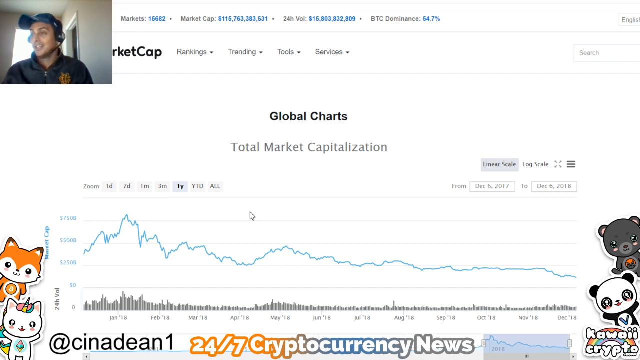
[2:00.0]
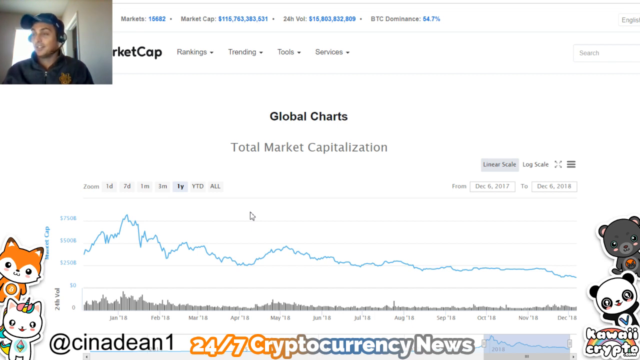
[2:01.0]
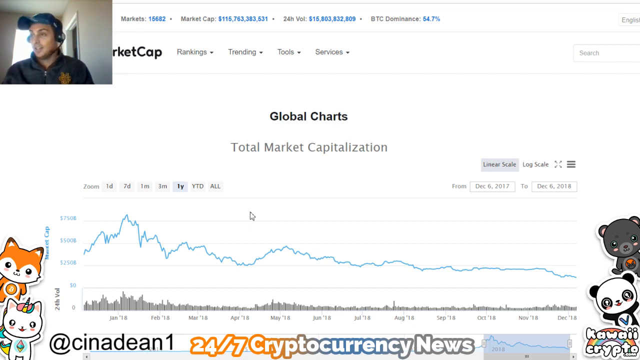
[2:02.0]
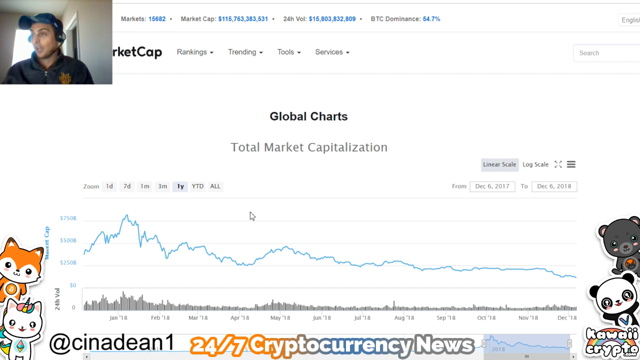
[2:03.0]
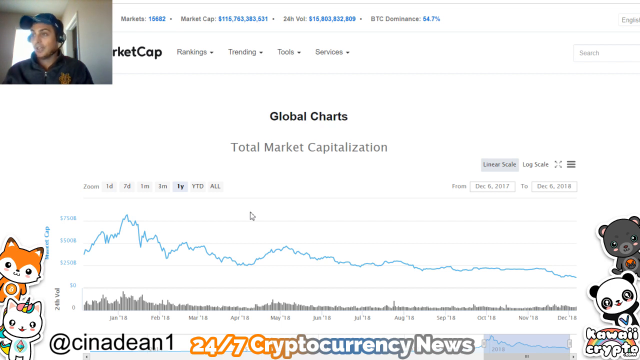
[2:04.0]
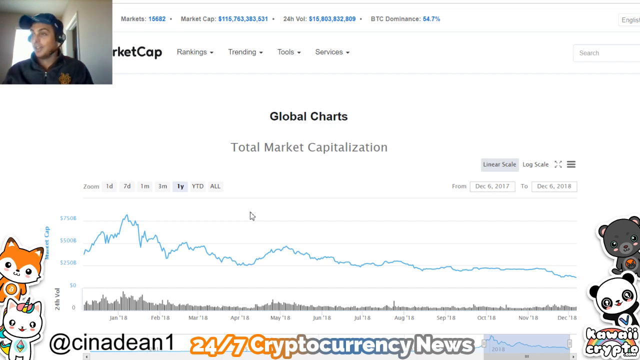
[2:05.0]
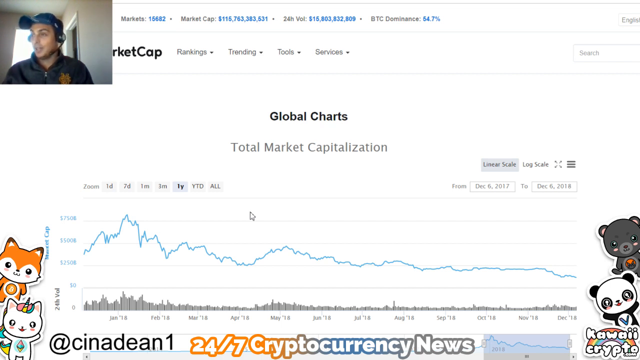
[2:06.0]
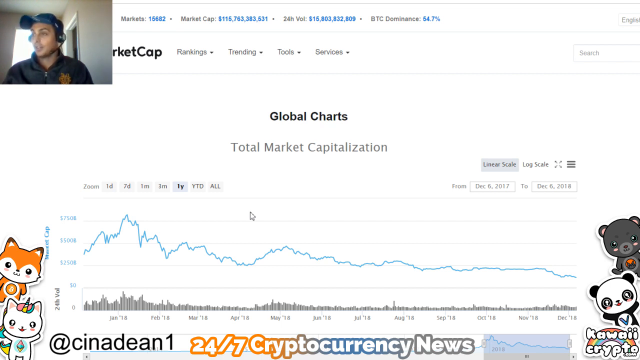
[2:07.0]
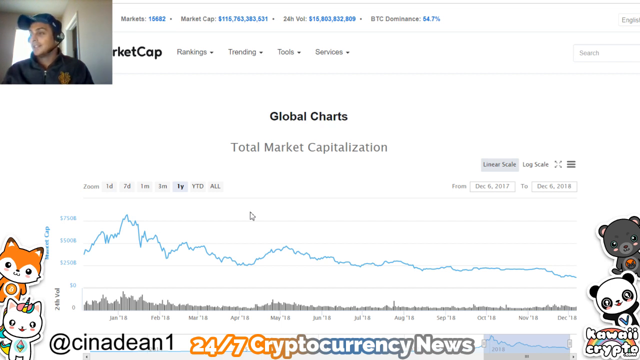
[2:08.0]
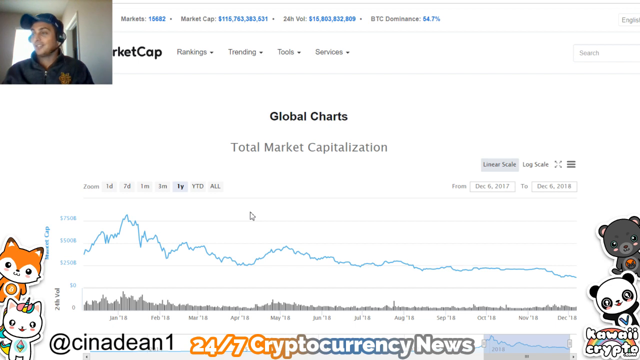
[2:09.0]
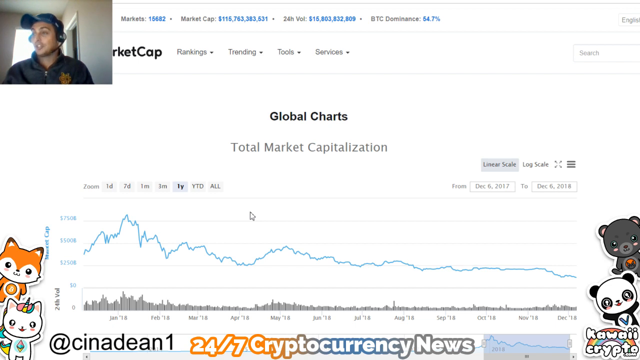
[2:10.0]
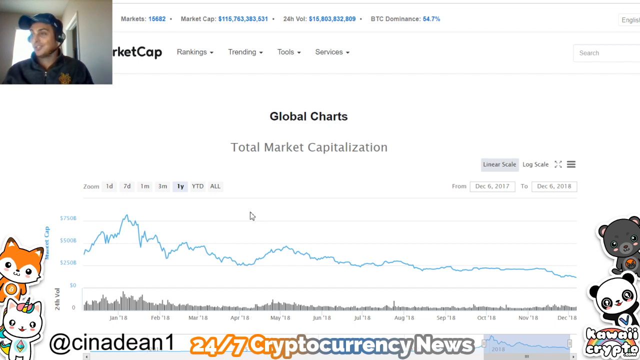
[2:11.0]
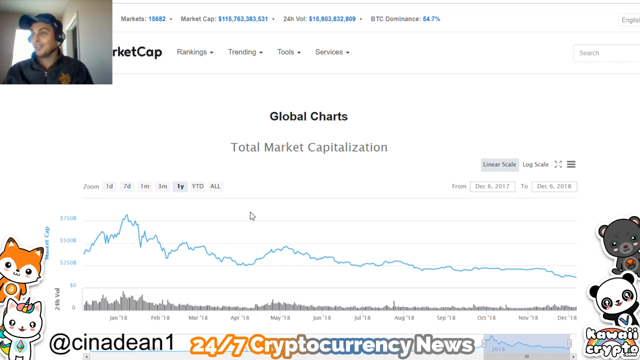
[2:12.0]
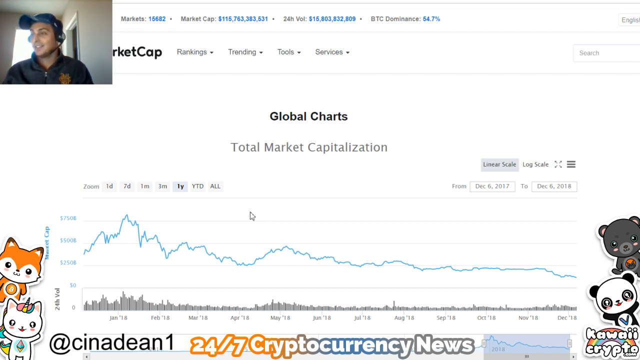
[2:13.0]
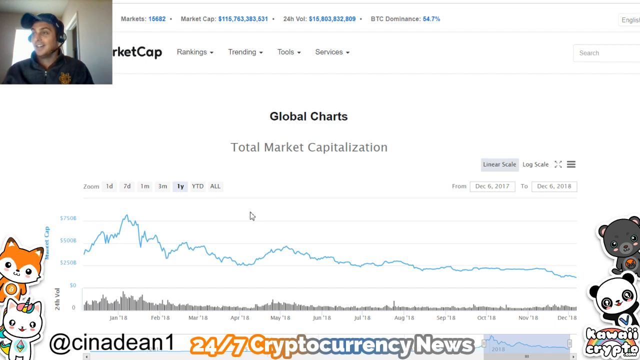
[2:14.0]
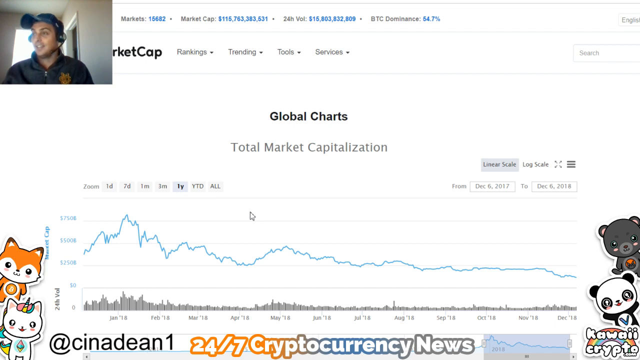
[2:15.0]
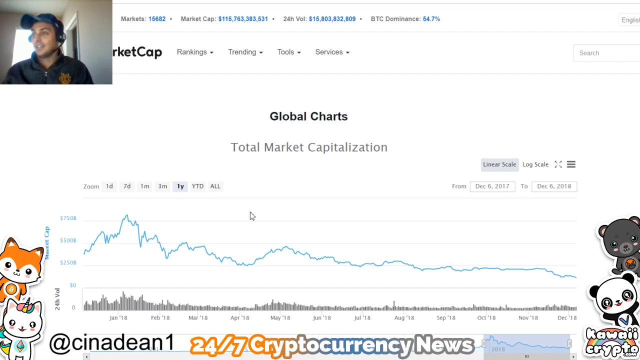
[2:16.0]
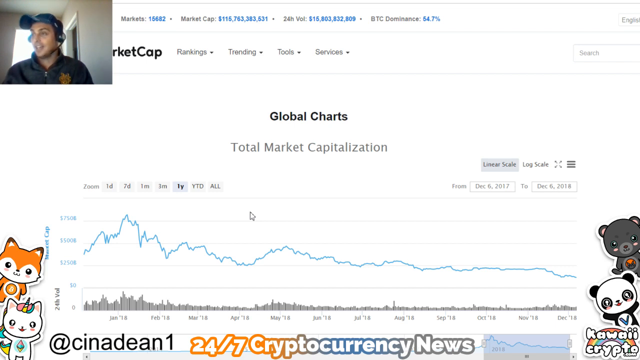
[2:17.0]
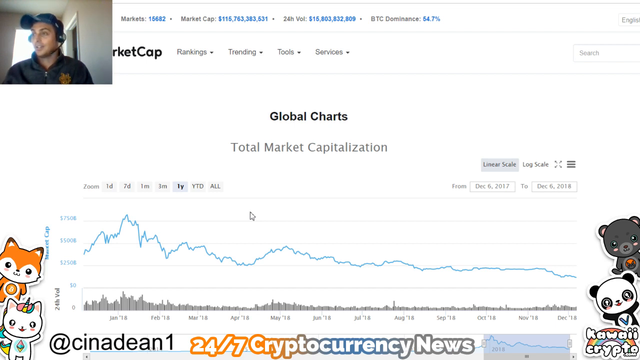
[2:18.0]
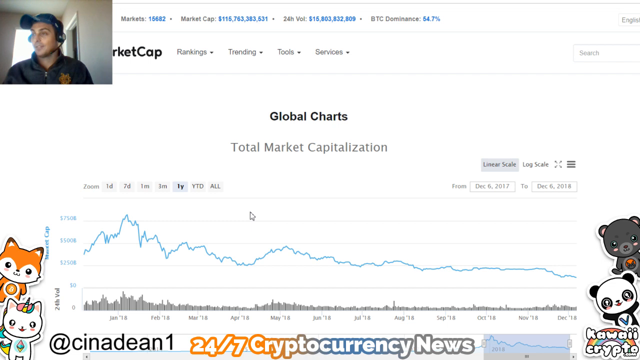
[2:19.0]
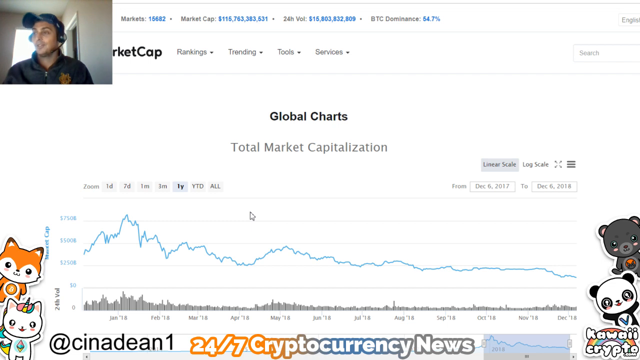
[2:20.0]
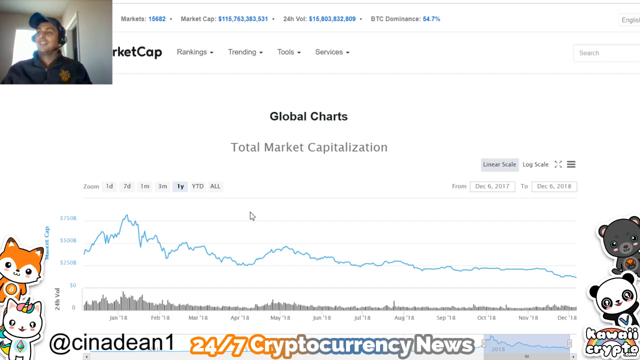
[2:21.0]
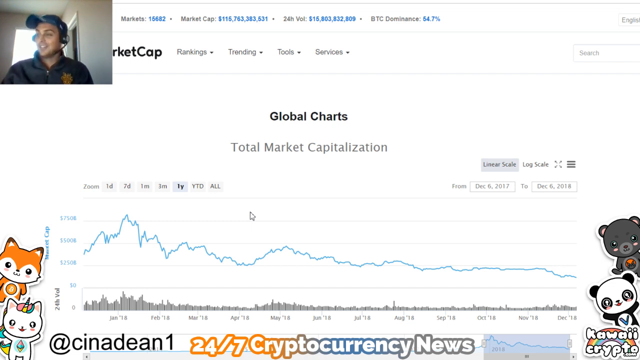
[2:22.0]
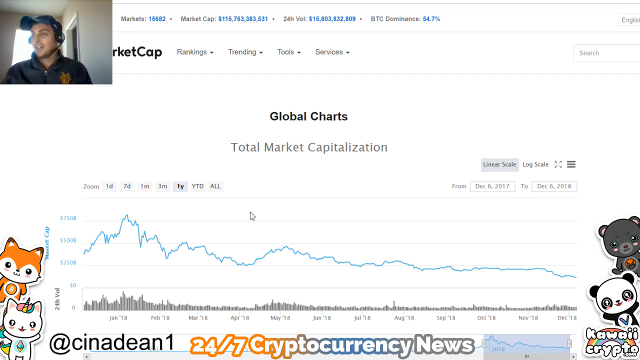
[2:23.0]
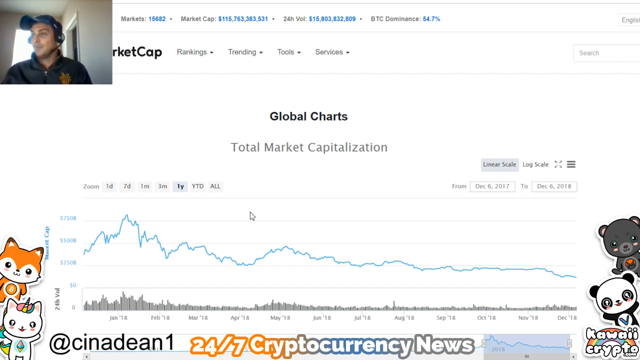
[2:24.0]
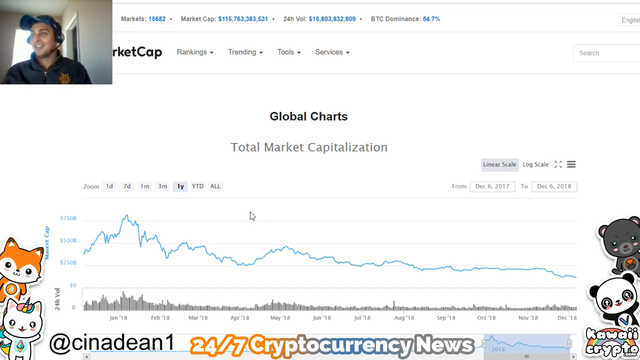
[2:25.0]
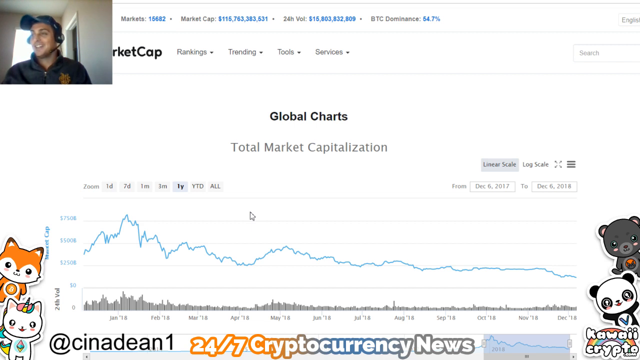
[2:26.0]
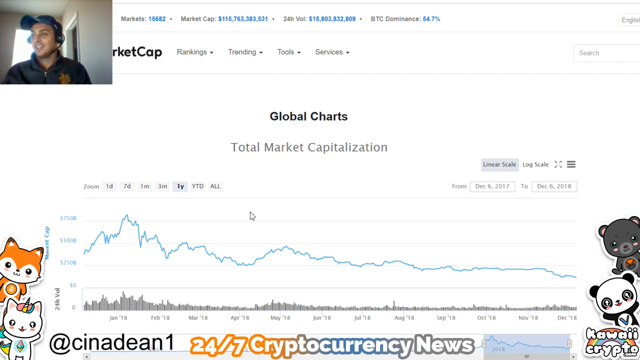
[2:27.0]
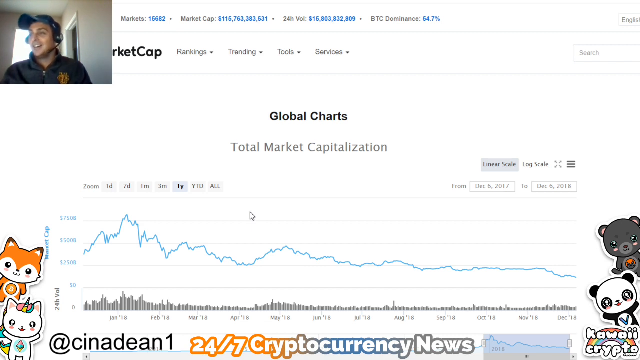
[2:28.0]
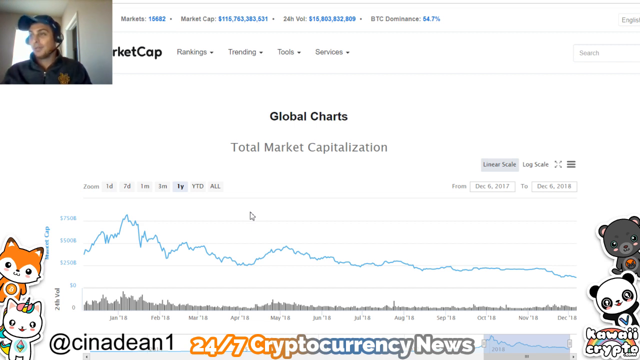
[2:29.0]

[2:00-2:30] The man in the upper left-hand corner is now in a slightly bigger square. He wears a dark jacket that looks like a team jacket with a small college logo, a baseball cap and a headset. A market cap page with a graph is shown, with menu items for rankings, trending, tools and services, and in the middle "Global Charts" and "total market capitalization", with zoom options for one day, seven days, month, three months, one year, year to date and all. Toward the bottom of the screen the text reads "24-7 cryptocurrency news" beside a picture of a fox, a panda and some bears, and the bottom right reads "Kauai Crypto". The man talks to his web audience. The chart covers December 6th, 2017 to December 6th, 2018, and its blue line went up roughly a year before, then went down, rebounded a little, and has since been kind of flat, slowly trending downhill.